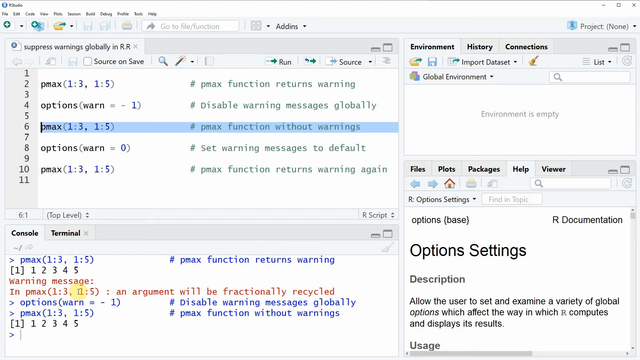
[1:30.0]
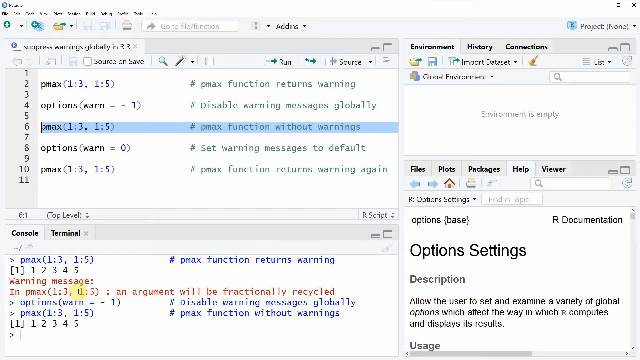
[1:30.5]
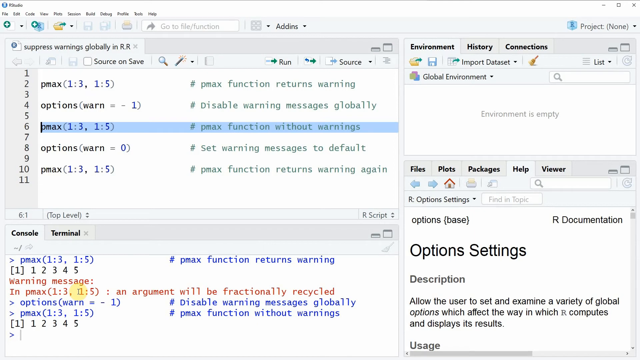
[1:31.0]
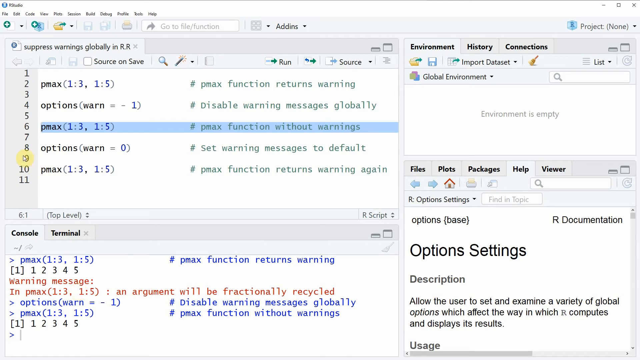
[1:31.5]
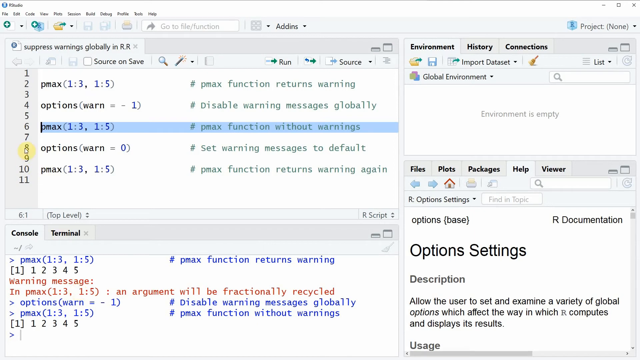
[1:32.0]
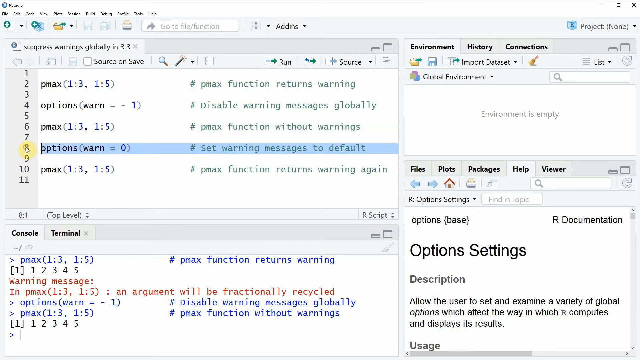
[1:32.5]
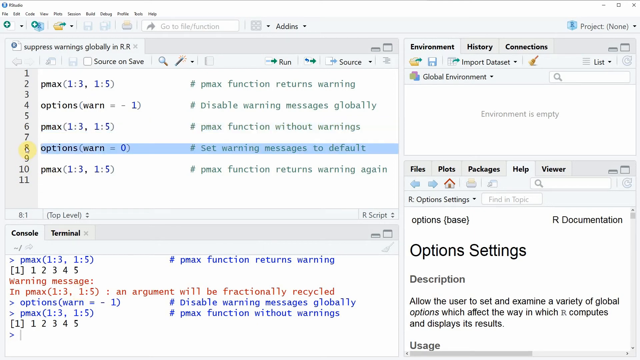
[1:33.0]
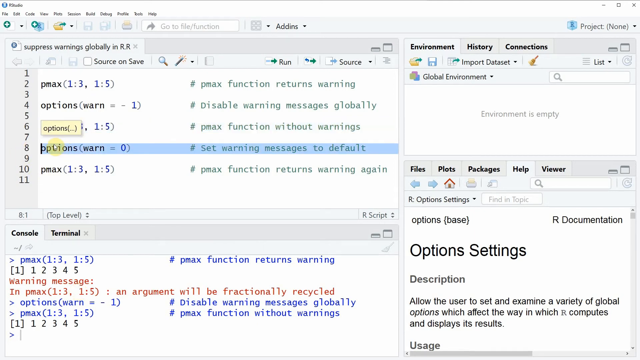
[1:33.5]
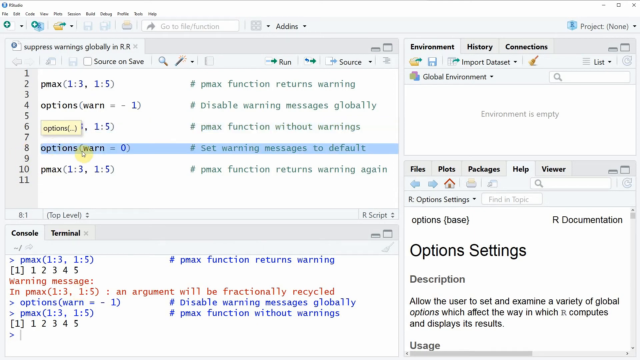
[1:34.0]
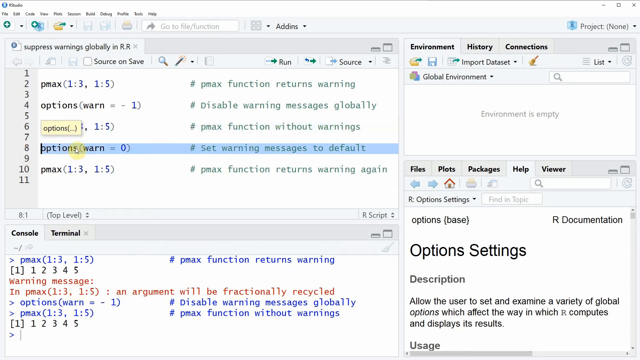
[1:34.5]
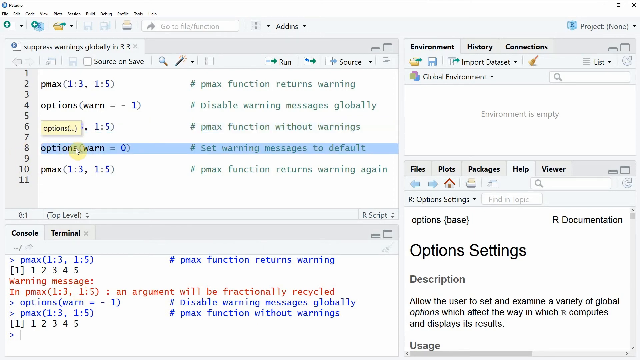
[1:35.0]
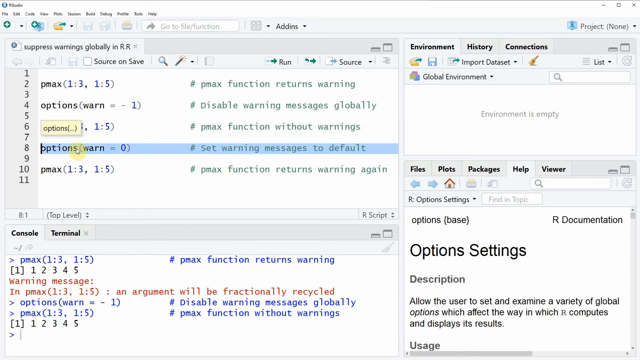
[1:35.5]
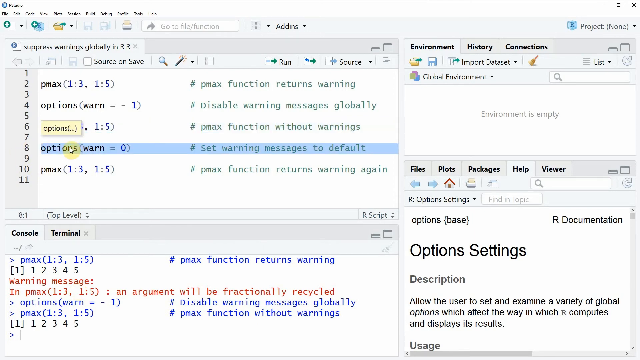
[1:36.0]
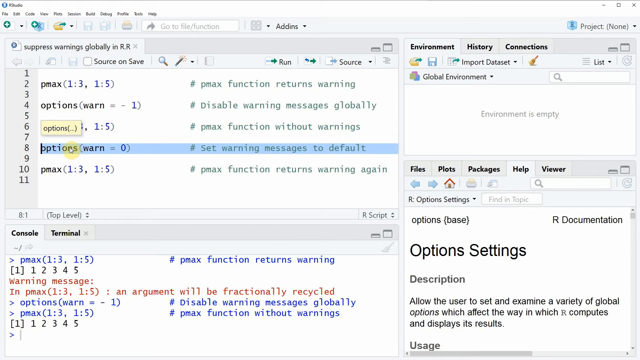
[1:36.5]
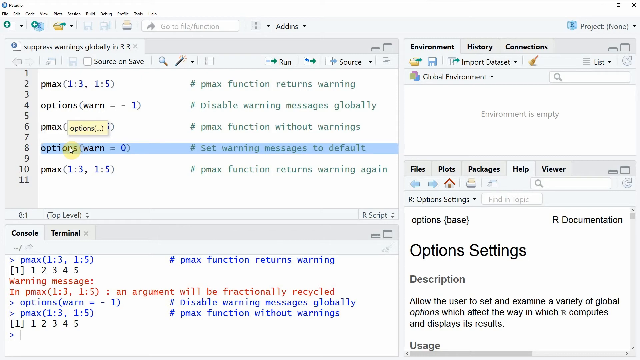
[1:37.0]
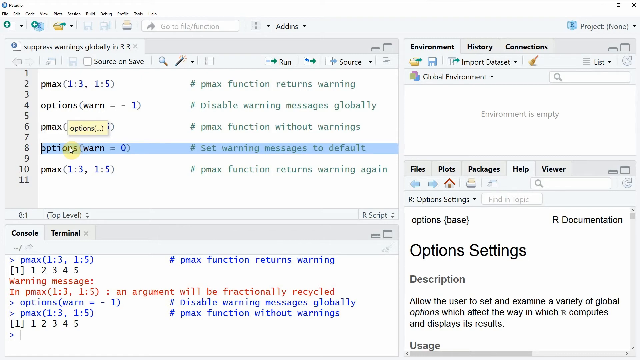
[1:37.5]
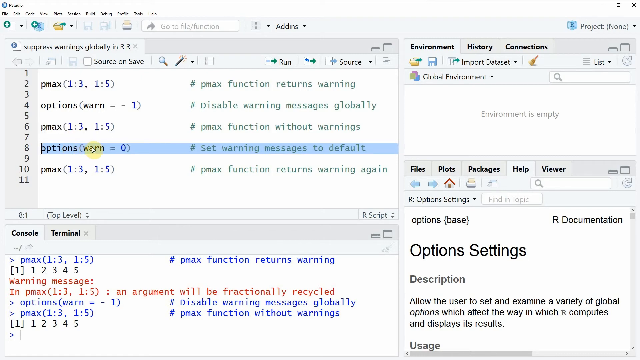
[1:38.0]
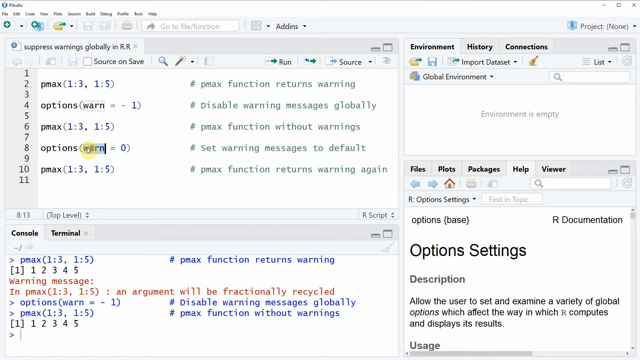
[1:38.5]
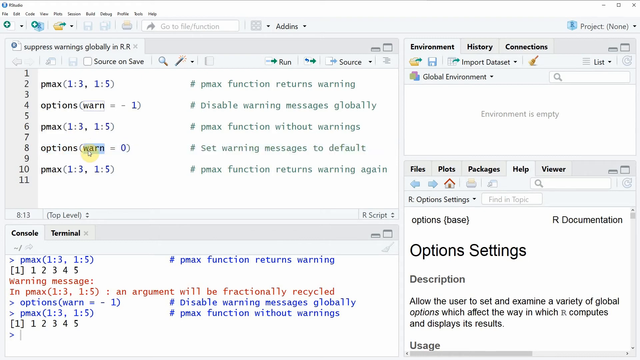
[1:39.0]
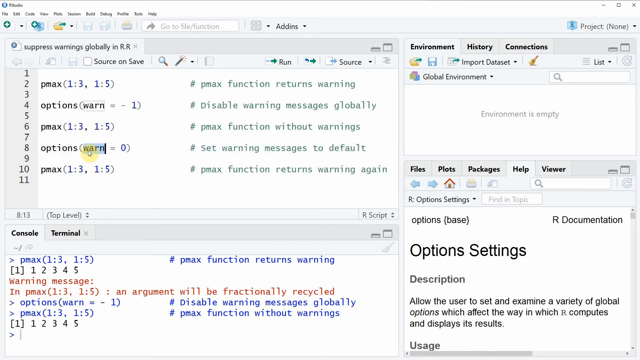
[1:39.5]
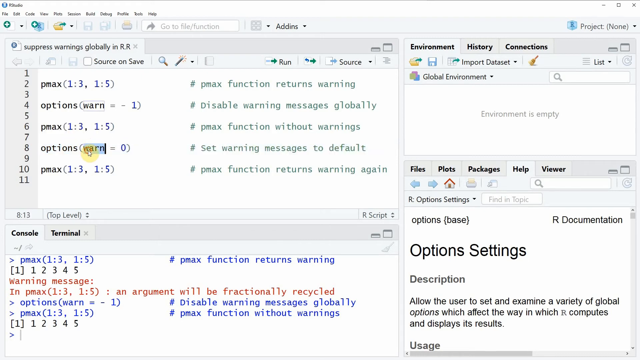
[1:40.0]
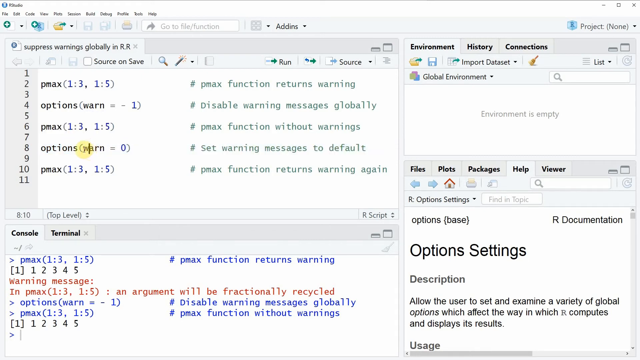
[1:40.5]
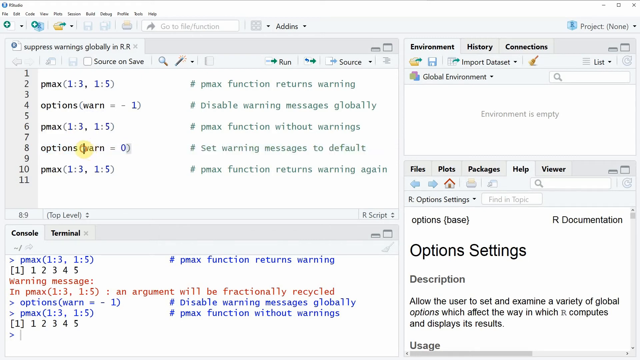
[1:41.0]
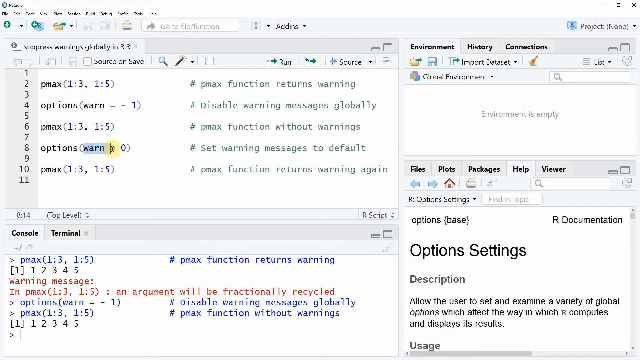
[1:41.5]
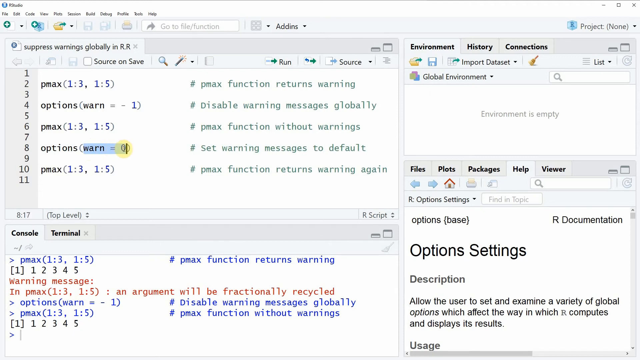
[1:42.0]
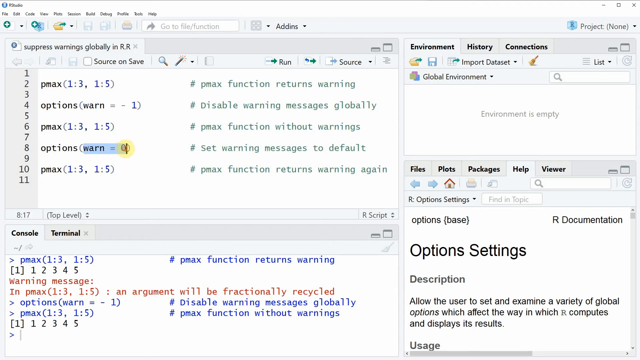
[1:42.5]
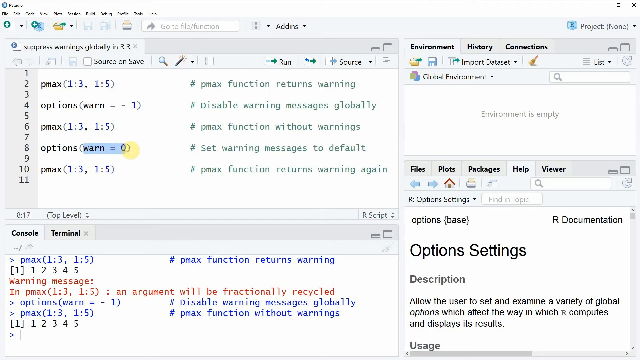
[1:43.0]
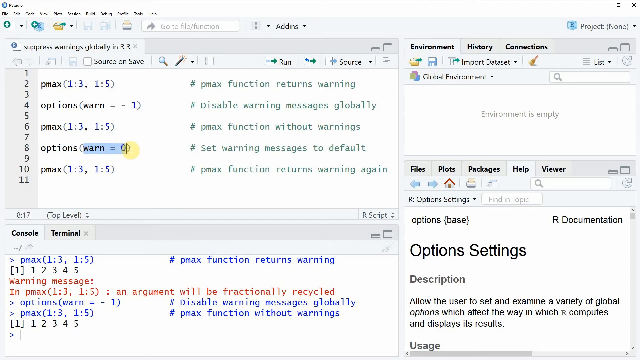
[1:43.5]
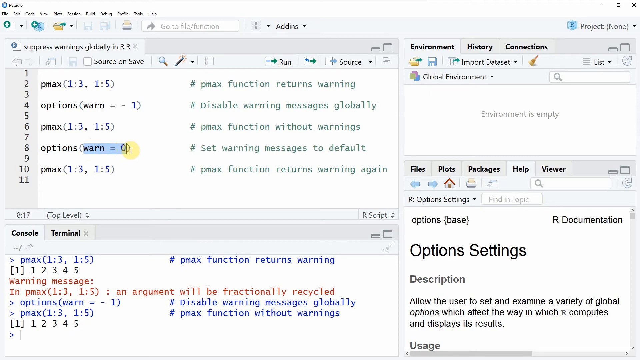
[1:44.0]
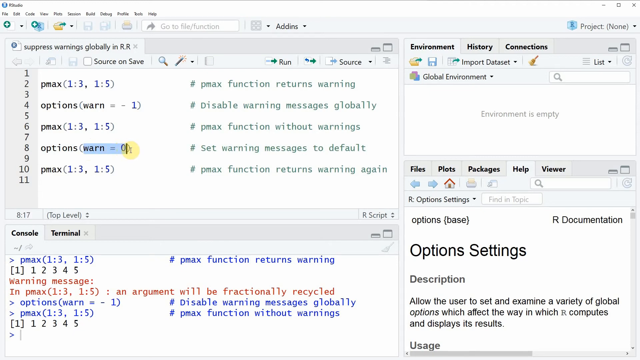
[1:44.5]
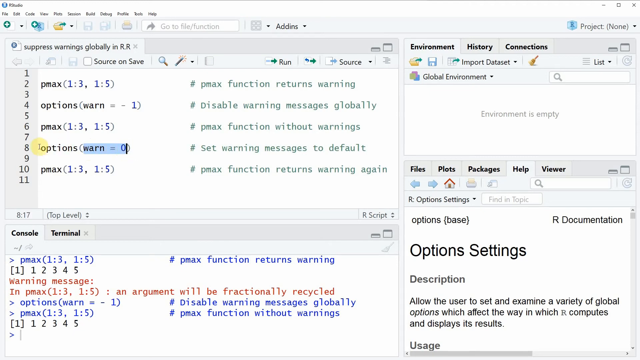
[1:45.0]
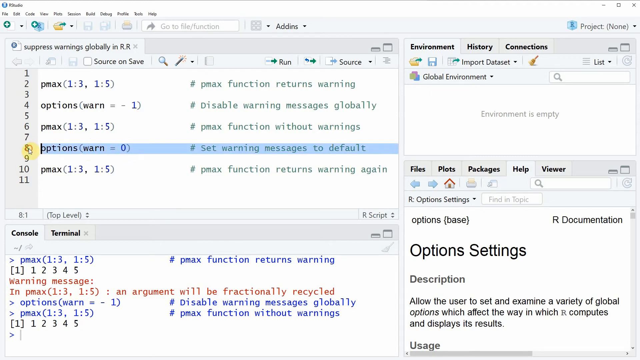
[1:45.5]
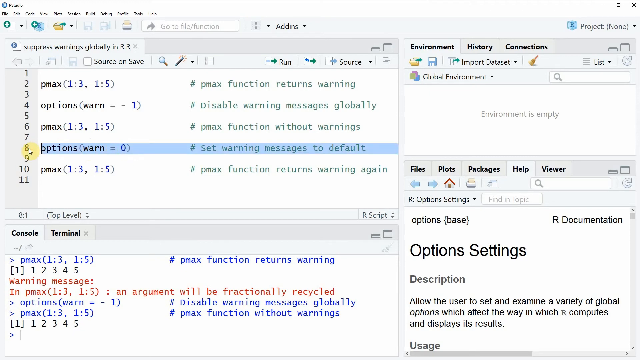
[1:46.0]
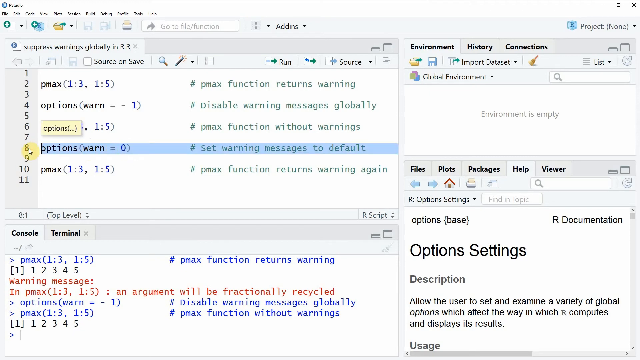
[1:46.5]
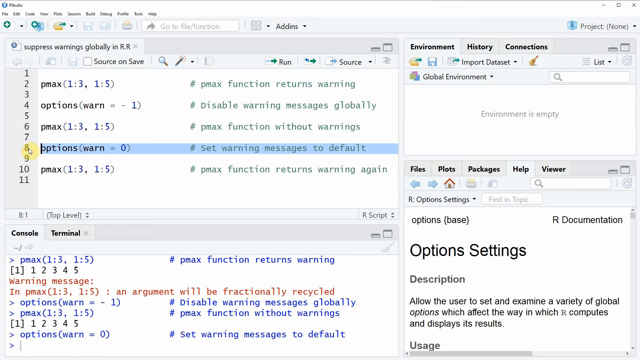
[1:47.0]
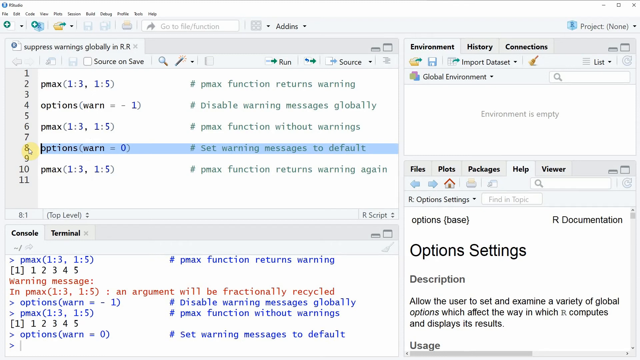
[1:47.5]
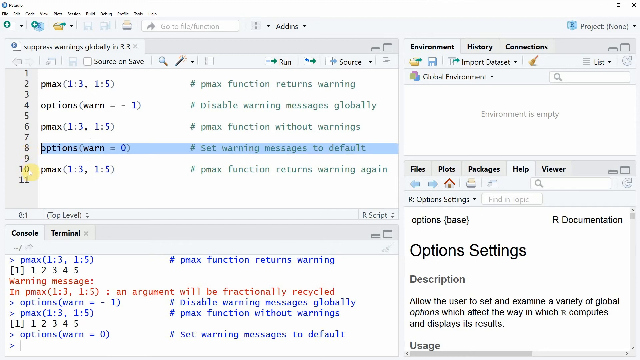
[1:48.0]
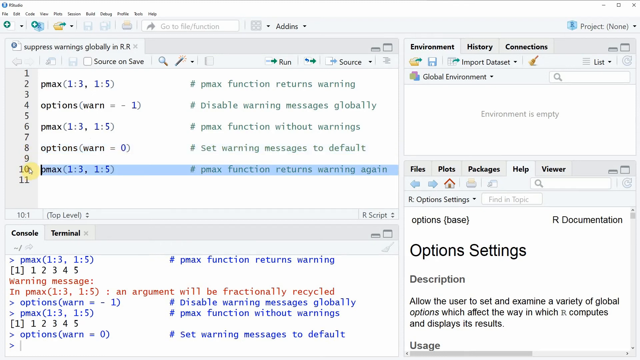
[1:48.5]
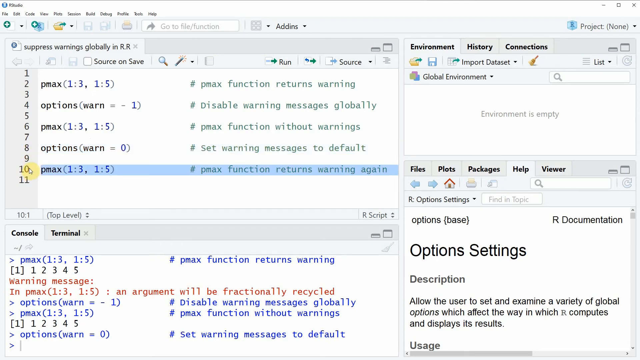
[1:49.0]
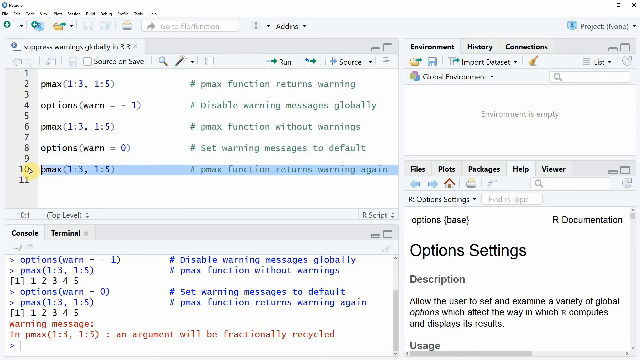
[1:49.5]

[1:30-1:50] The same coding page shows the pmax and options code on a white or black page. An options value input set equal to zero is selected, with the comment "set warning message to default". A white text box with brackets and commas inside is shown. The selection is not run; the options value is only selected.